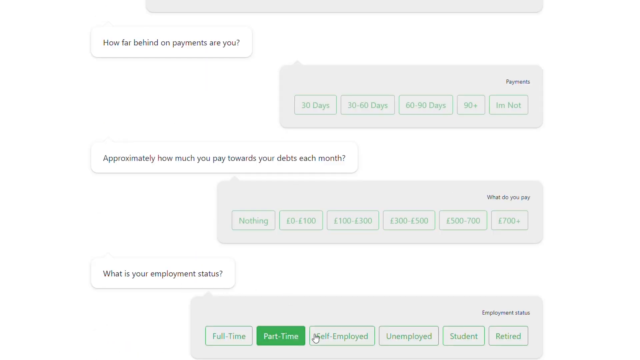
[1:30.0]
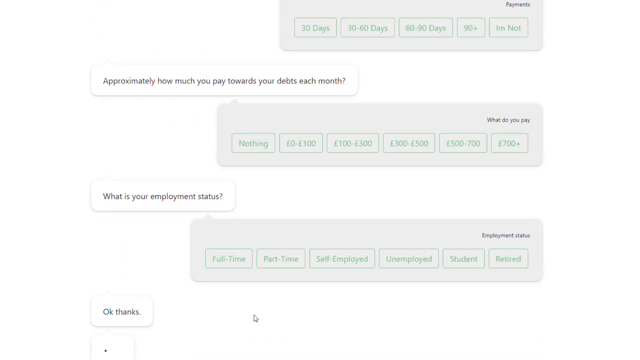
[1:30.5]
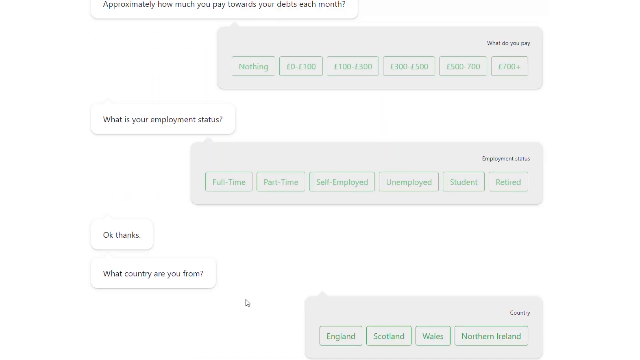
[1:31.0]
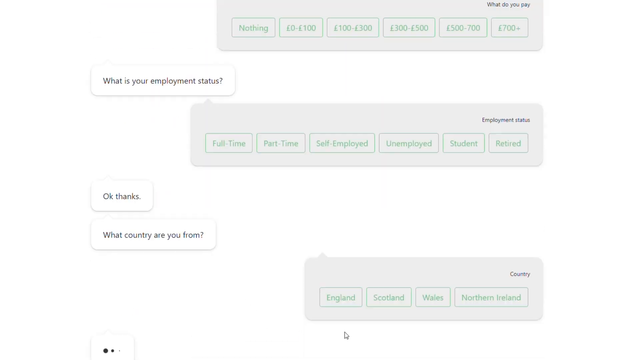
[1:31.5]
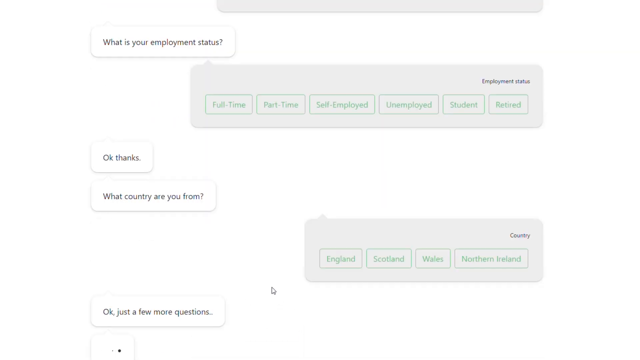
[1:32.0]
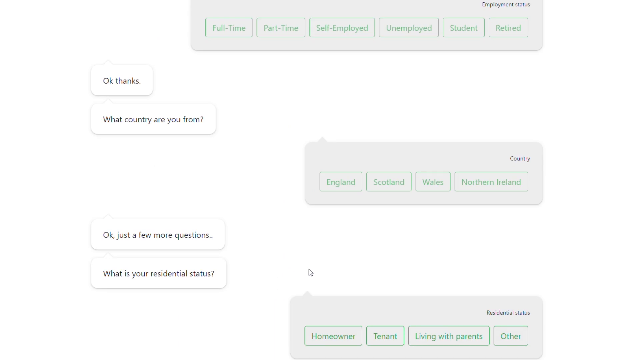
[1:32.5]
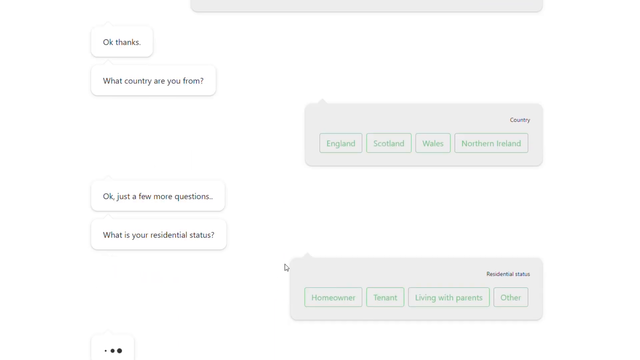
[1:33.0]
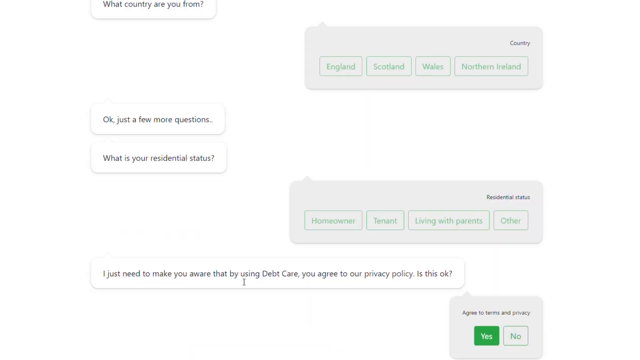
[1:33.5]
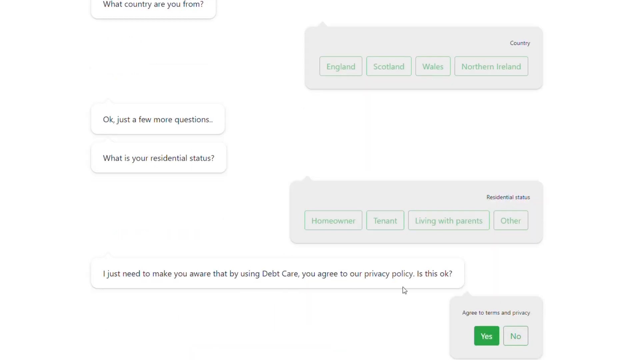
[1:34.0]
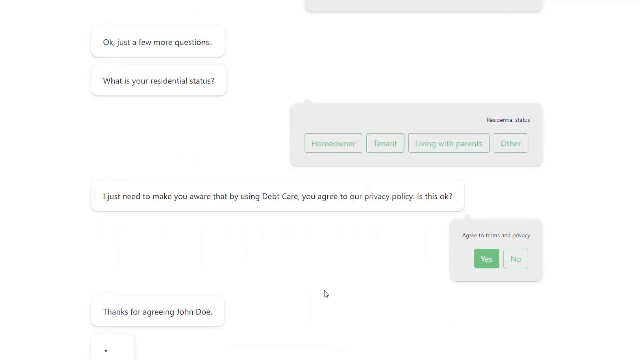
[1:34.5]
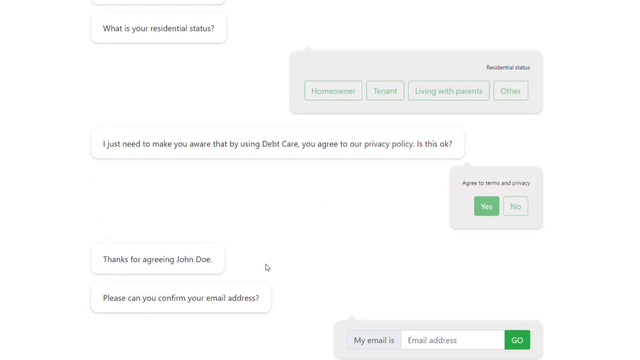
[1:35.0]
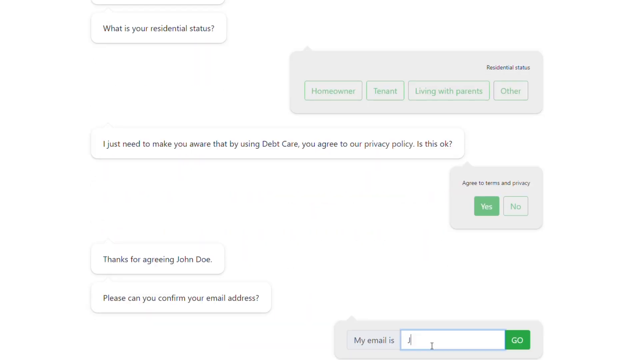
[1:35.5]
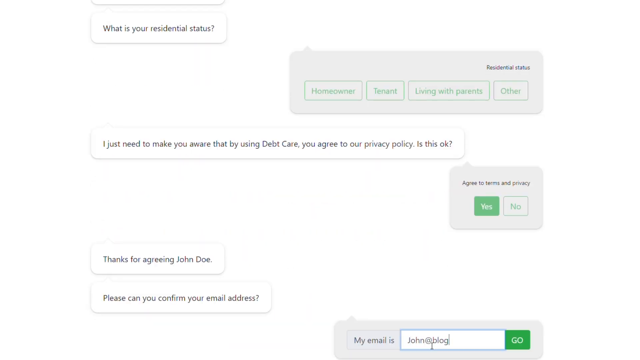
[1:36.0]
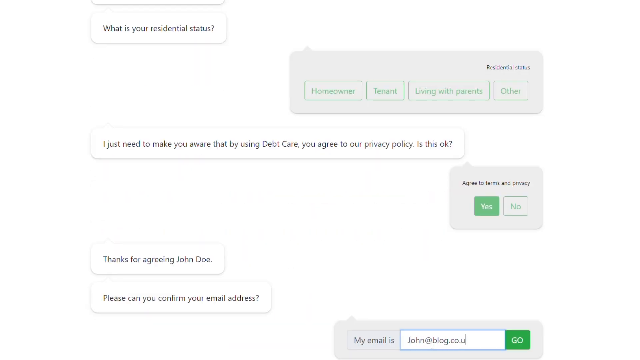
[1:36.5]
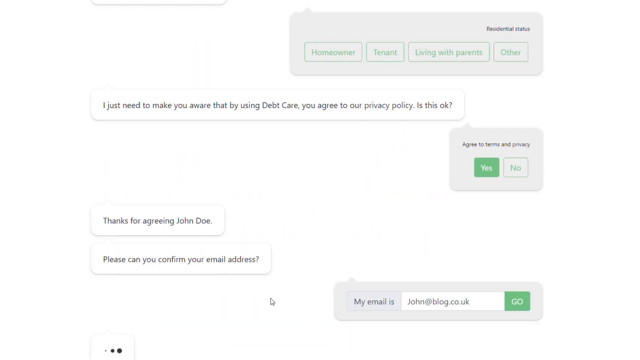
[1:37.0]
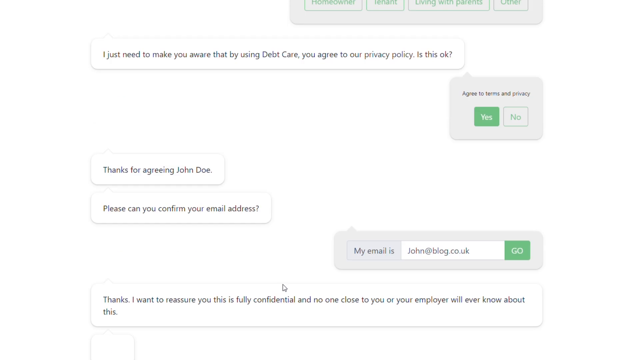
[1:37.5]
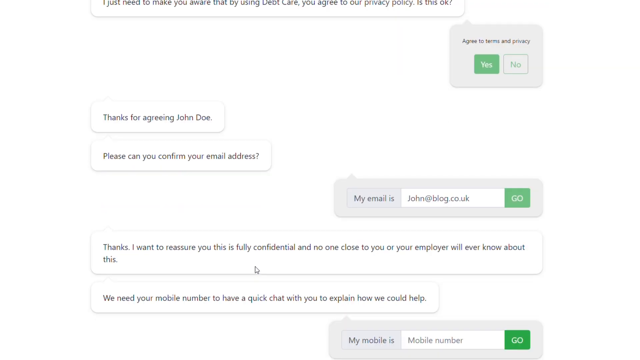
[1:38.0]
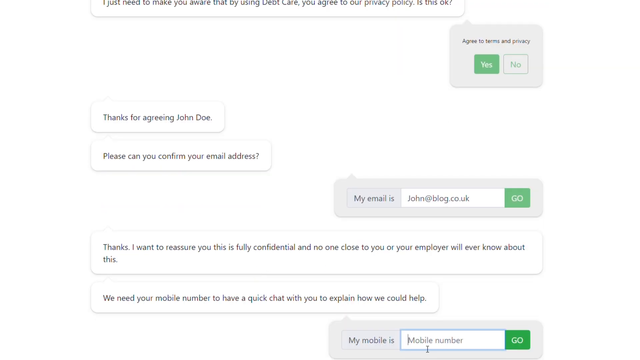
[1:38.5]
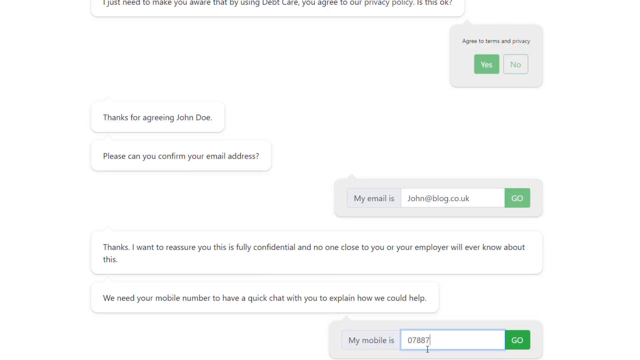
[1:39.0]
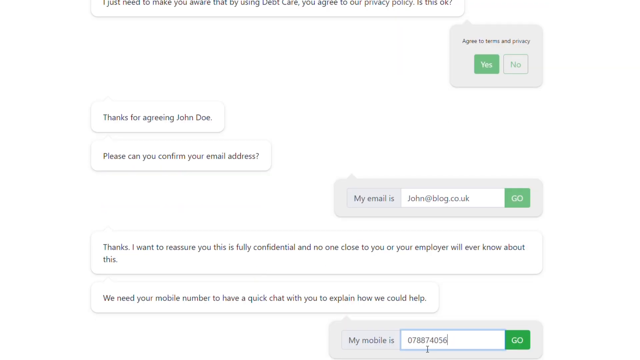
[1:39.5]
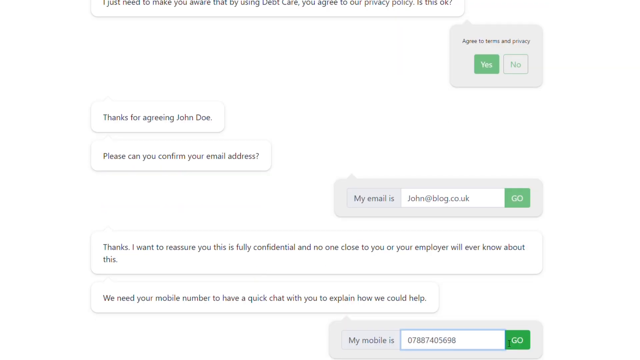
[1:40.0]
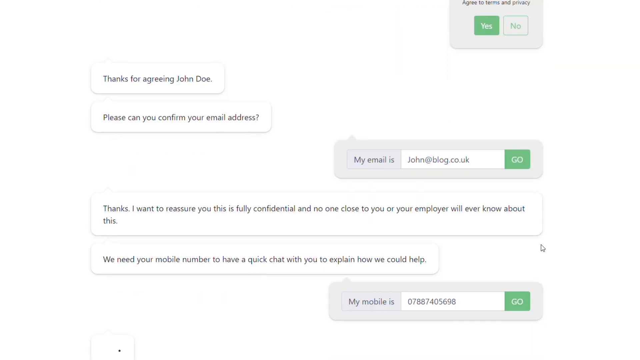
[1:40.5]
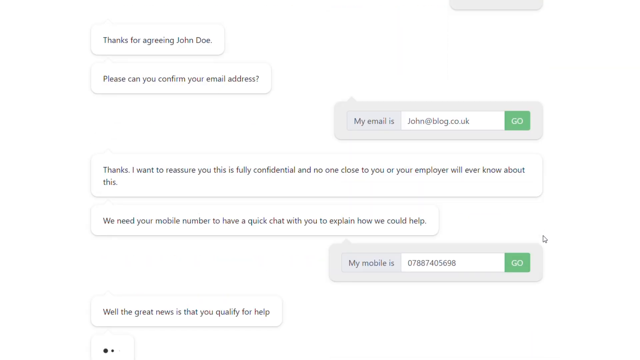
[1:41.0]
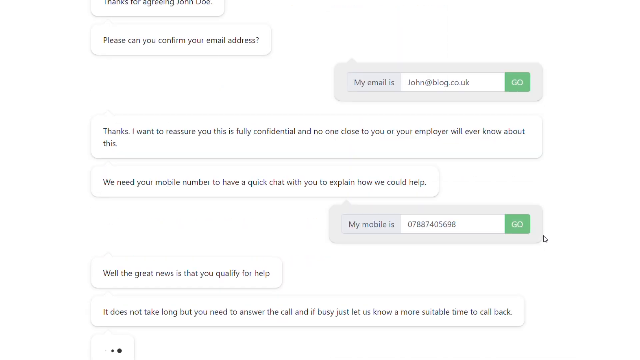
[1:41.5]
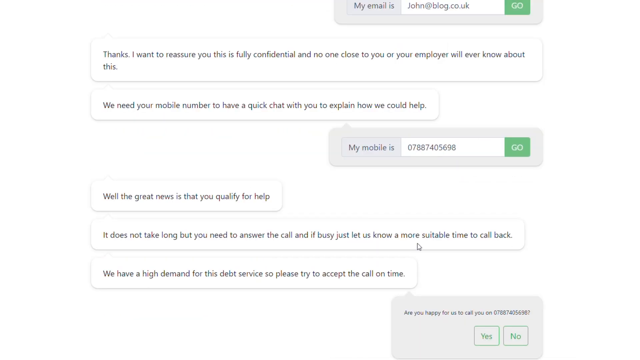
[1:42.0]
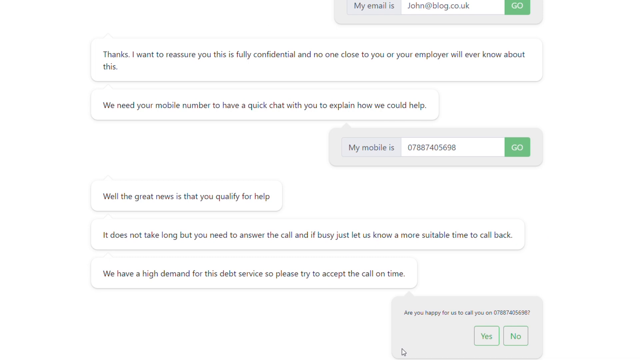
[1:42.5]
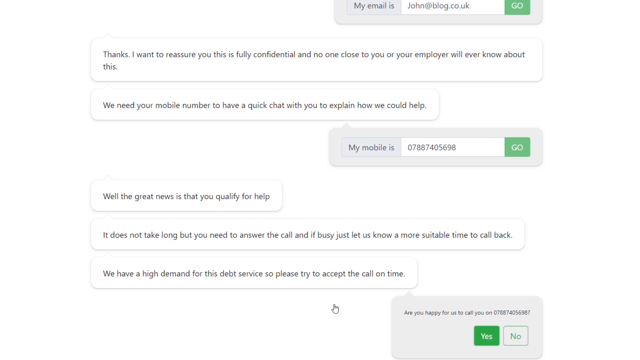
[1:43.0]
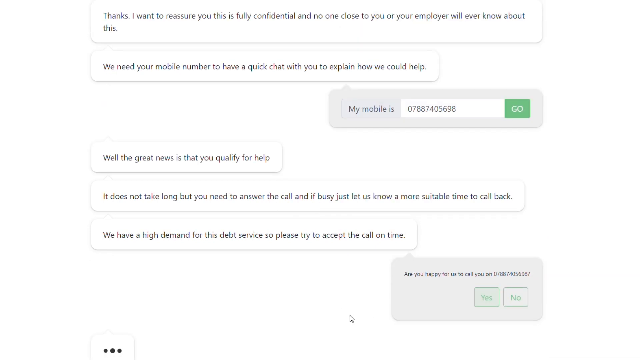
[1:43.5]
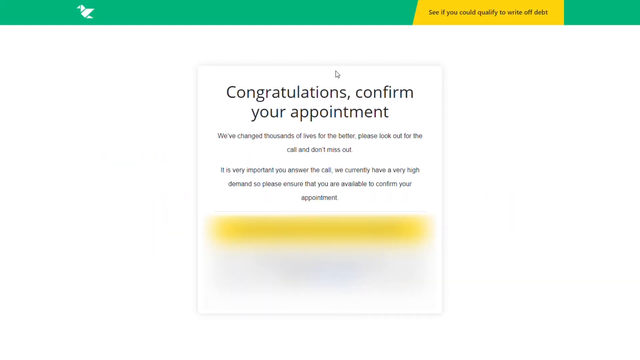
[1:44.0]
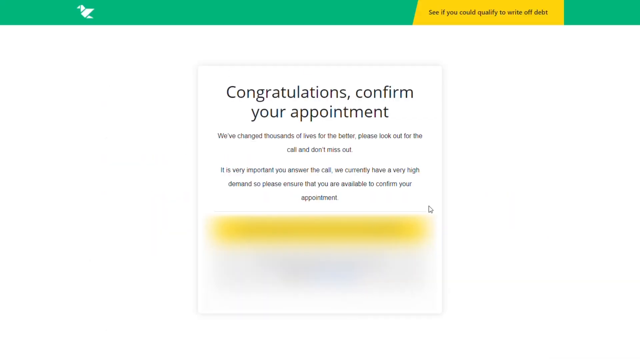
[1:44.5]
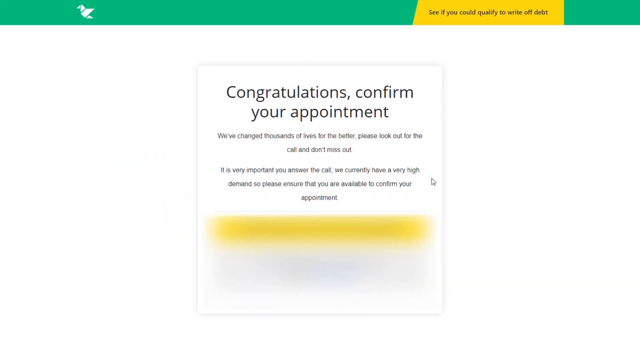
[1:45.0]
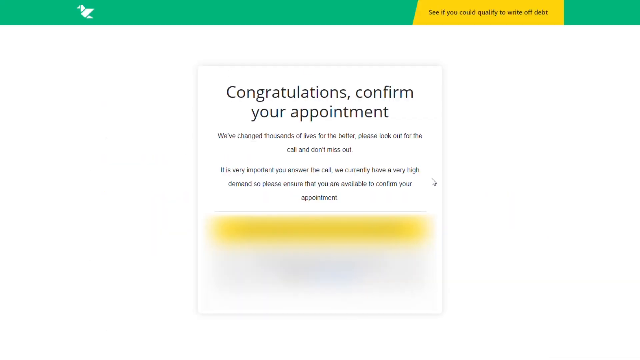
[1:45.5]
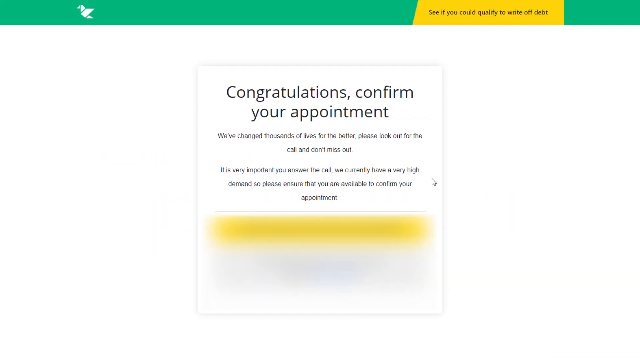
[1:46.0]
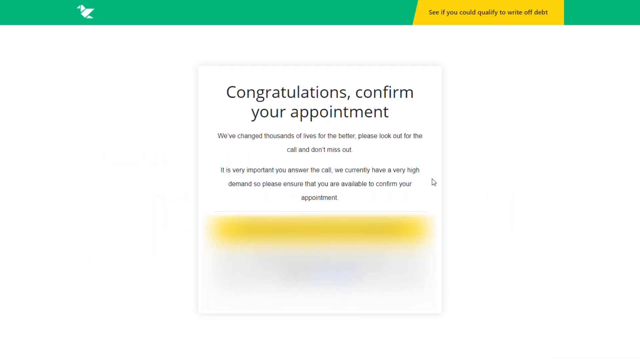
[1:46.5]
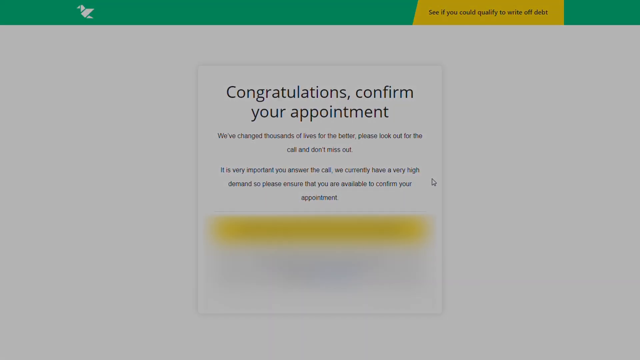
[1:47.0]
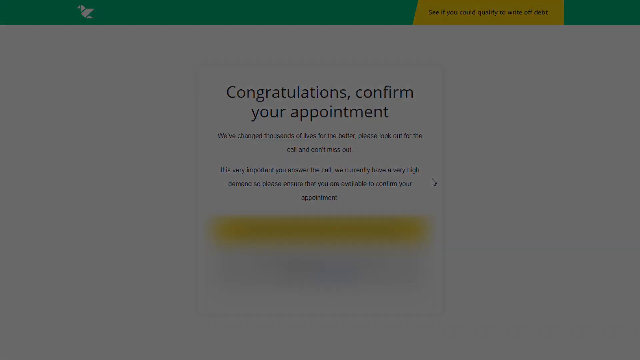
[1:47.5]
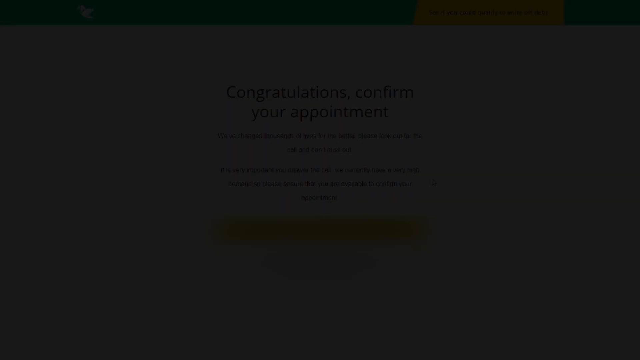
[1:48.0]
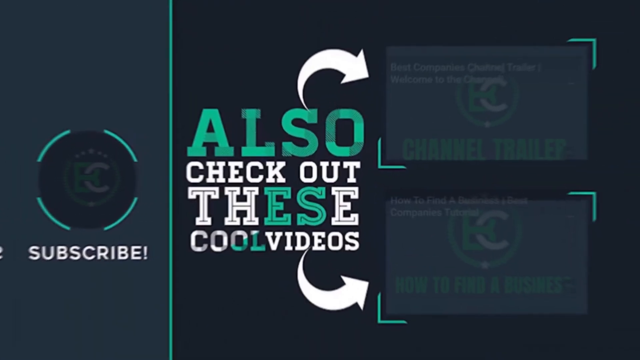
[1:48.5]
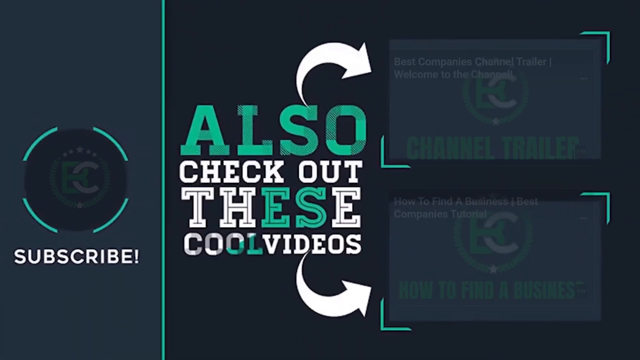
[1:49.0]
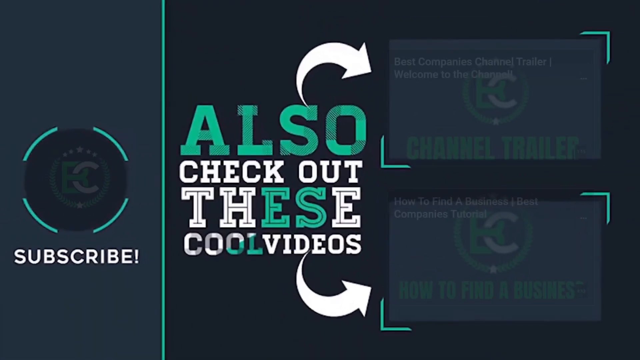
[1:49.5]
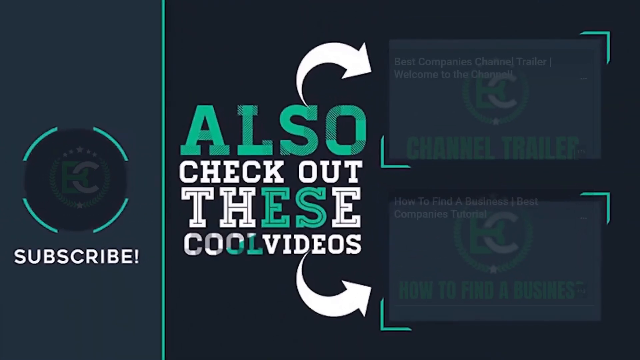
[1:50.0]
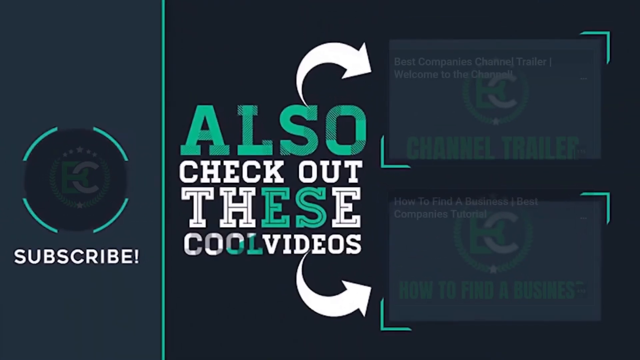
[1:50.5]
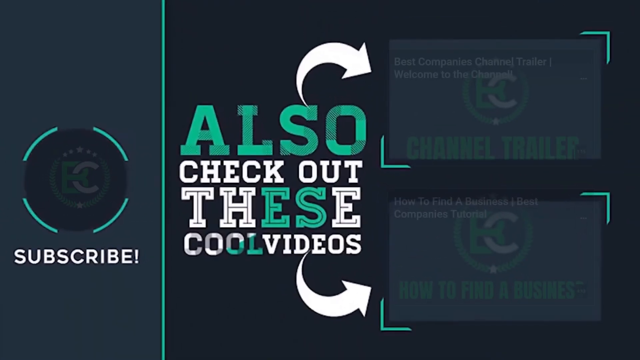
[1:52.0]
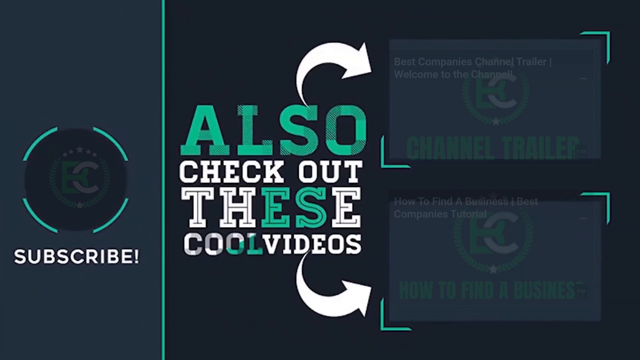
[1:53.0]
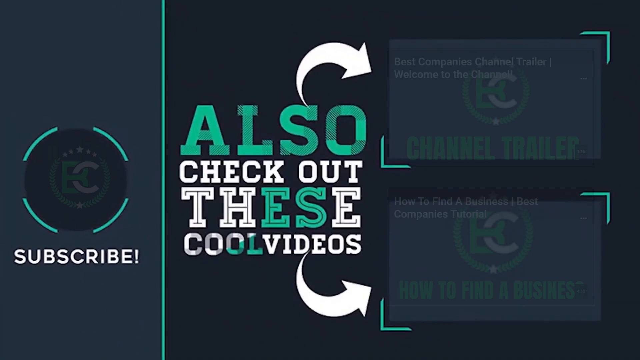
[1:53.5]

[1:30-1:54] The screen with the chat between the AI bot and the person returns; it seems to be an example of what a conversation with the AI bot would look like. Then the screen shows text including "calculations" and "confirm your appointment", seemingly from some sort of site or organization that helps with debt. The images are stock images. The final shot is a banner that says "also check out these videos" and "subscribe to this channel".